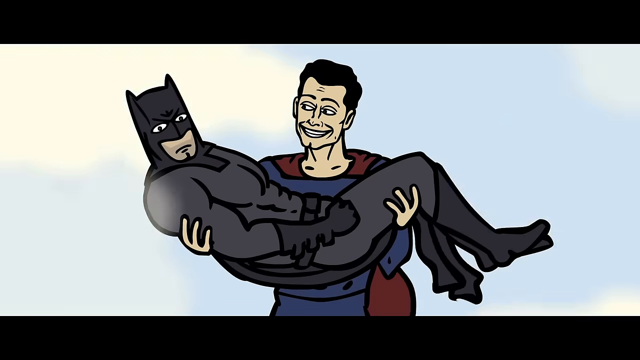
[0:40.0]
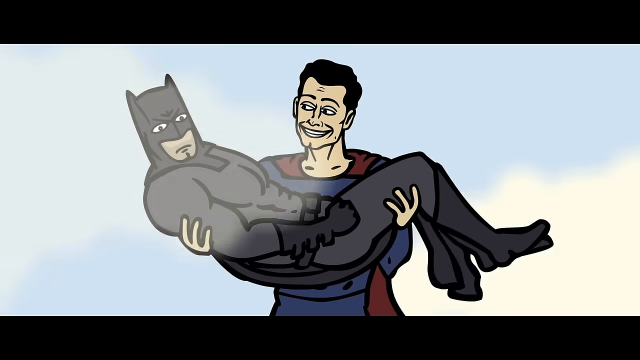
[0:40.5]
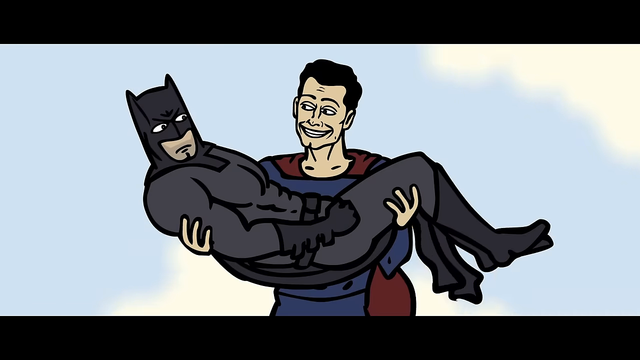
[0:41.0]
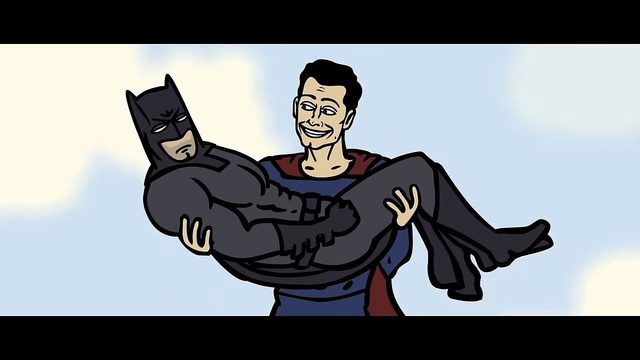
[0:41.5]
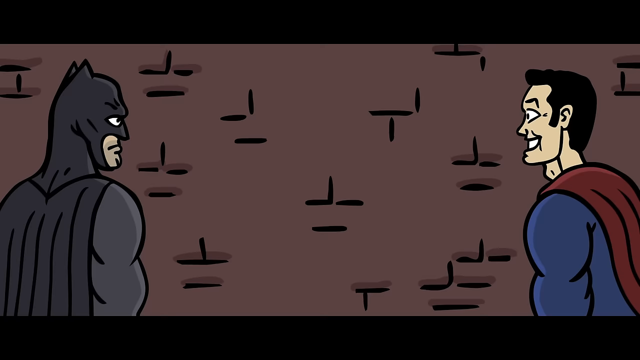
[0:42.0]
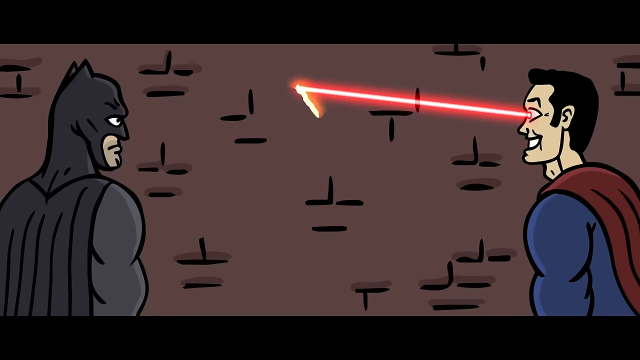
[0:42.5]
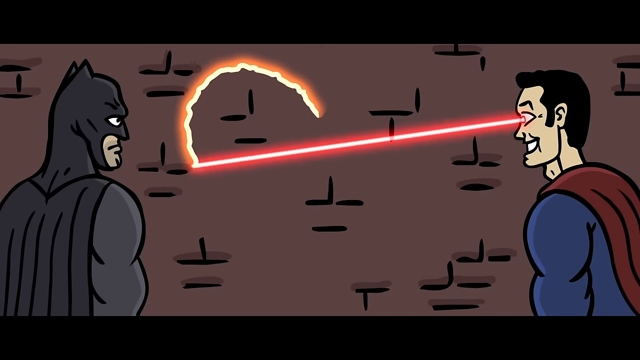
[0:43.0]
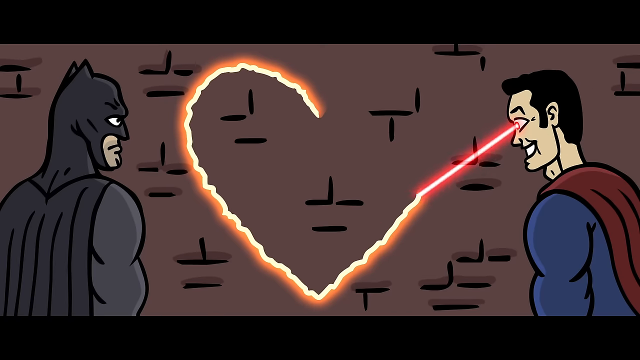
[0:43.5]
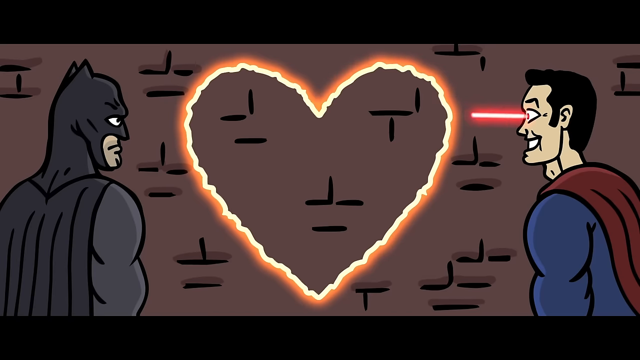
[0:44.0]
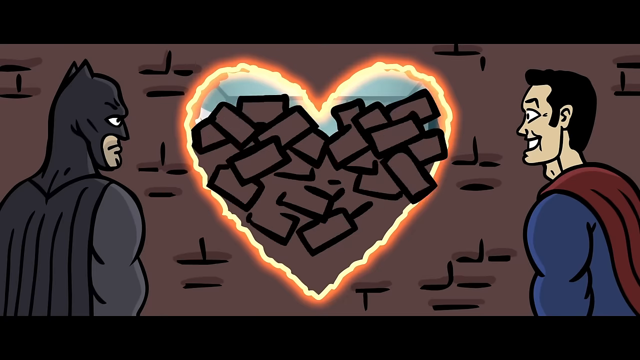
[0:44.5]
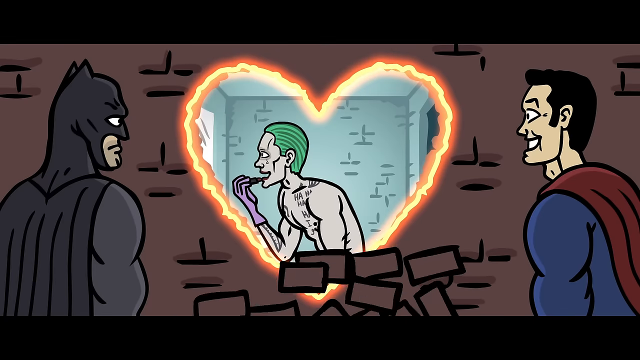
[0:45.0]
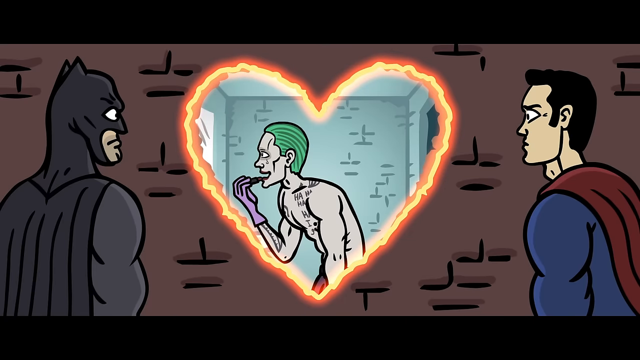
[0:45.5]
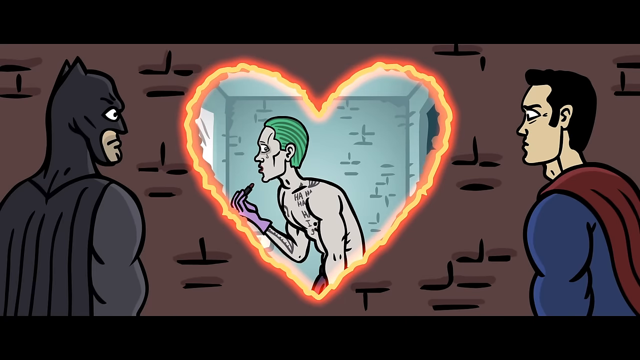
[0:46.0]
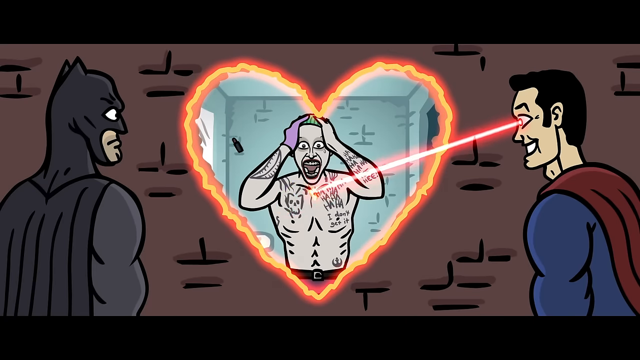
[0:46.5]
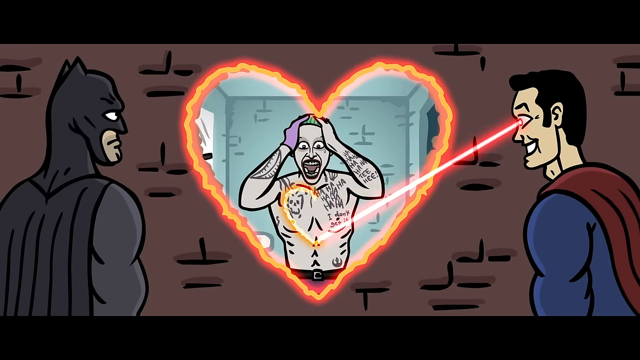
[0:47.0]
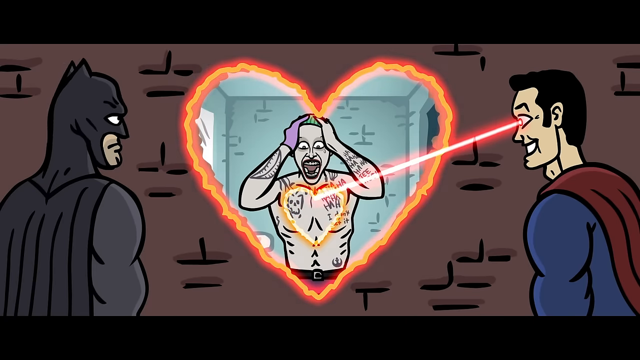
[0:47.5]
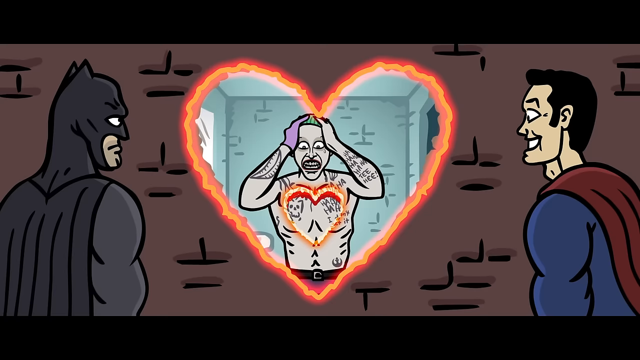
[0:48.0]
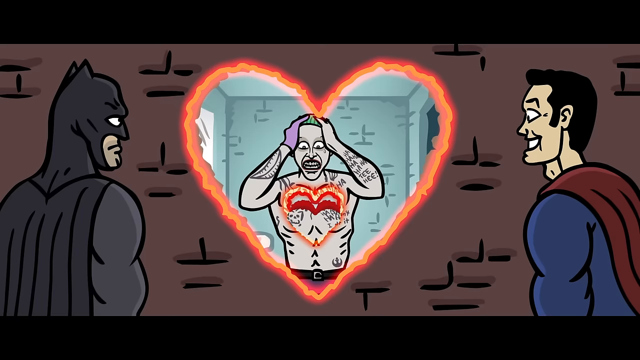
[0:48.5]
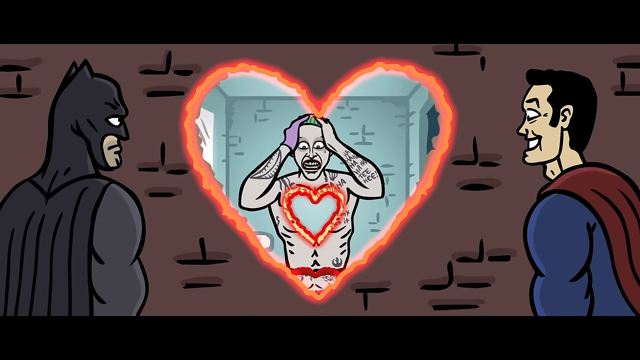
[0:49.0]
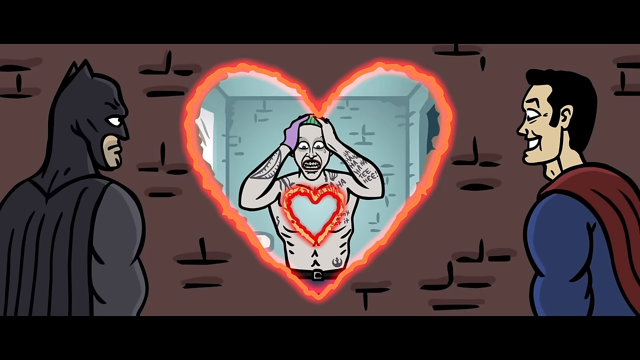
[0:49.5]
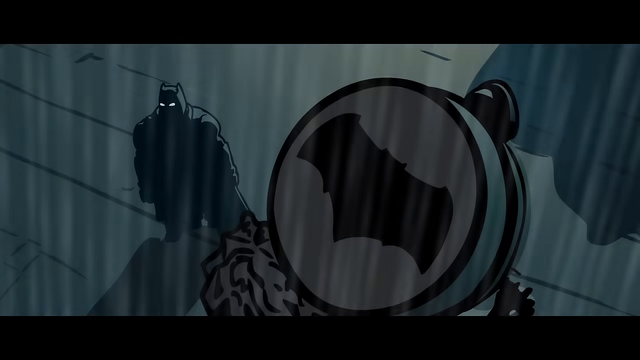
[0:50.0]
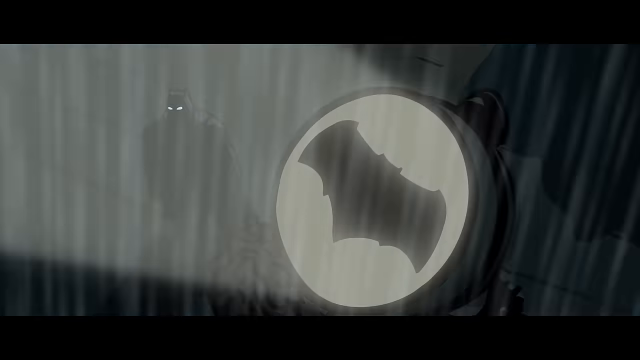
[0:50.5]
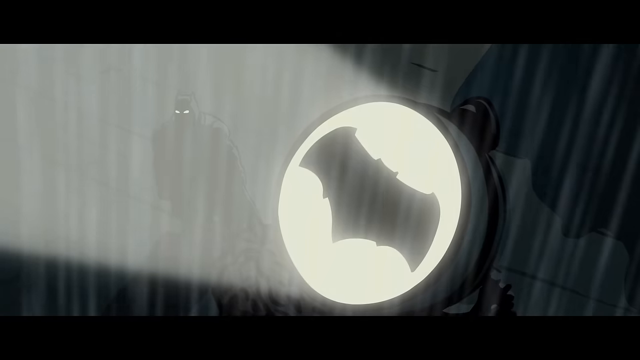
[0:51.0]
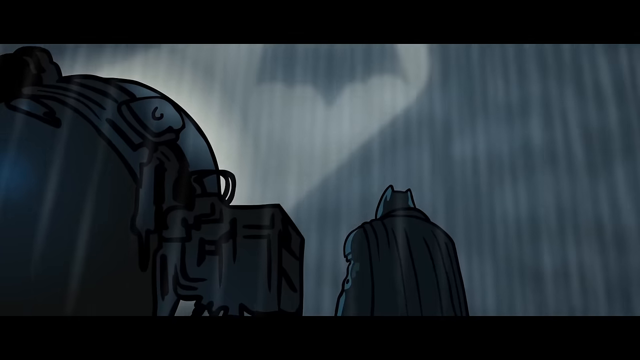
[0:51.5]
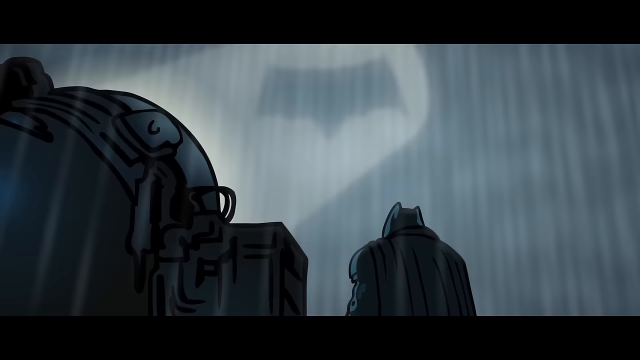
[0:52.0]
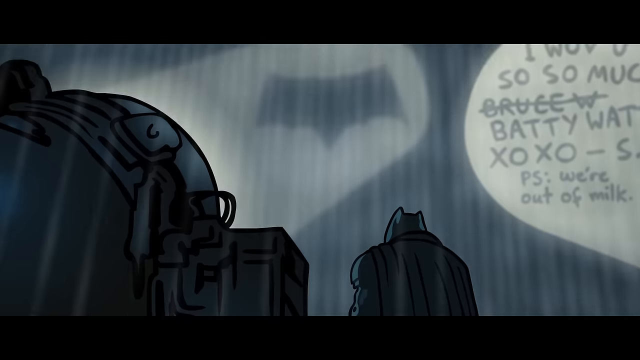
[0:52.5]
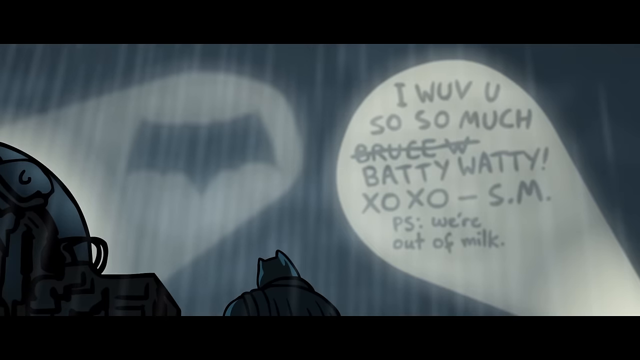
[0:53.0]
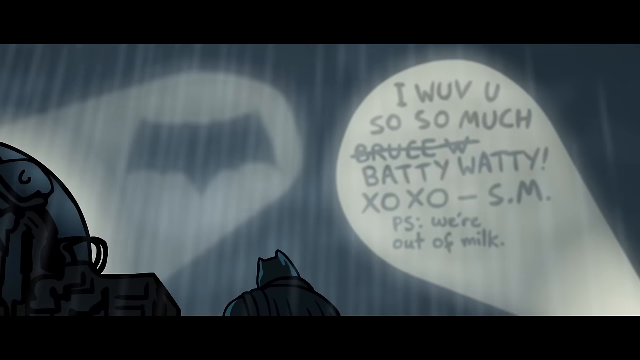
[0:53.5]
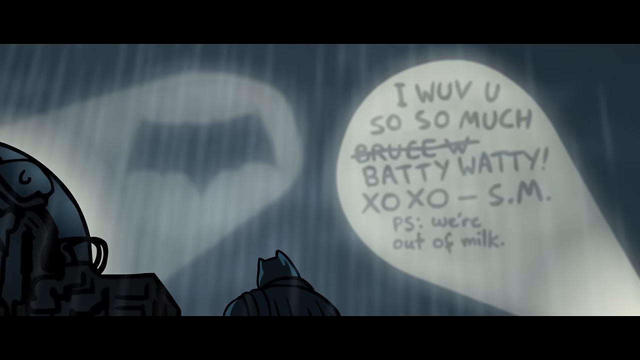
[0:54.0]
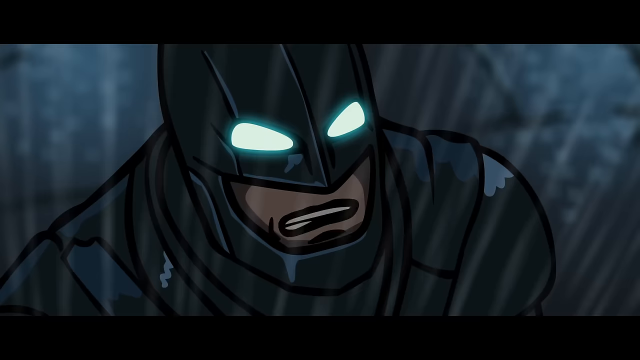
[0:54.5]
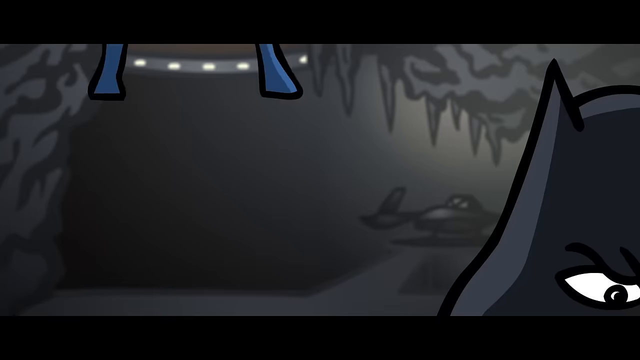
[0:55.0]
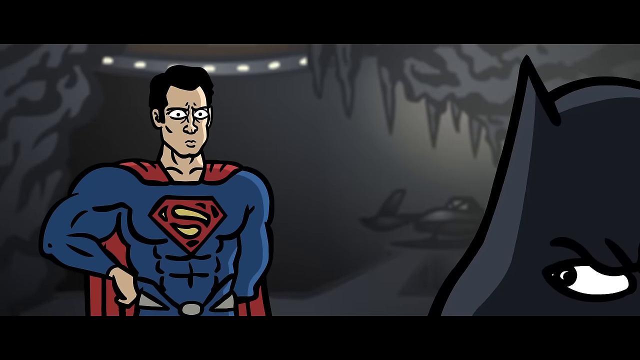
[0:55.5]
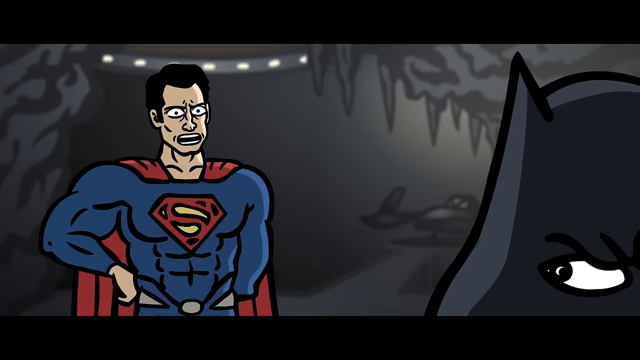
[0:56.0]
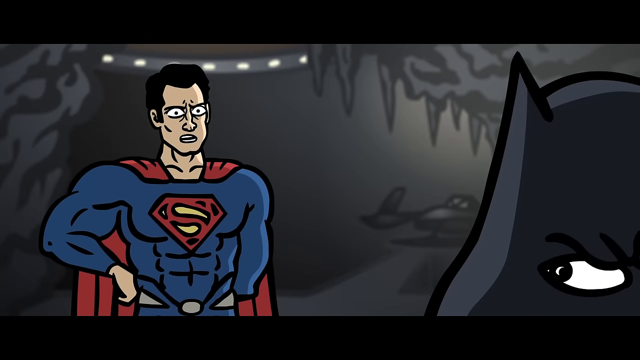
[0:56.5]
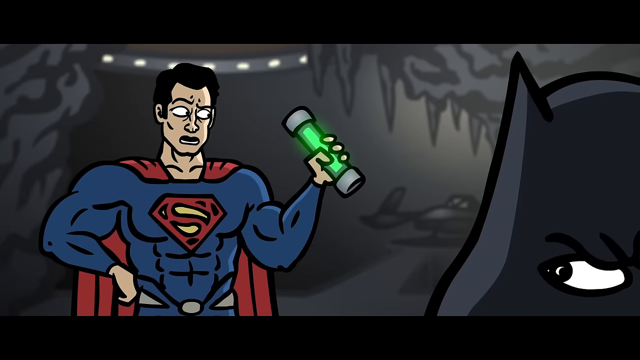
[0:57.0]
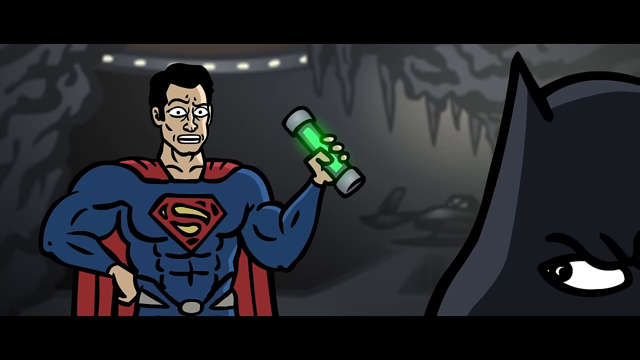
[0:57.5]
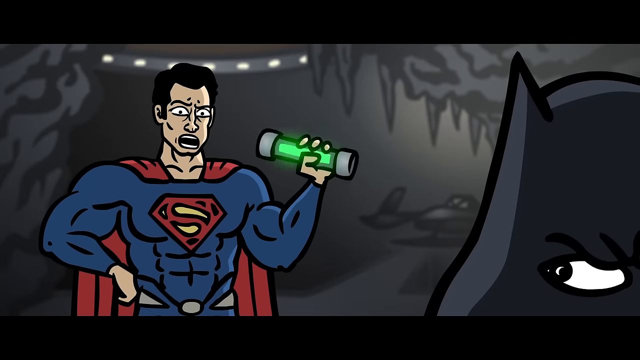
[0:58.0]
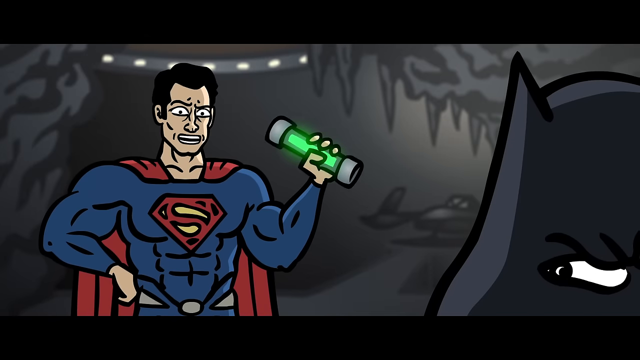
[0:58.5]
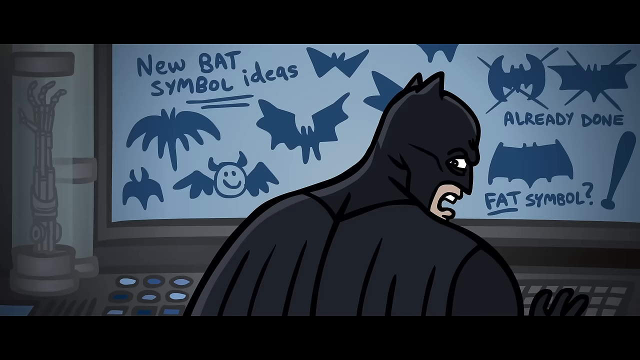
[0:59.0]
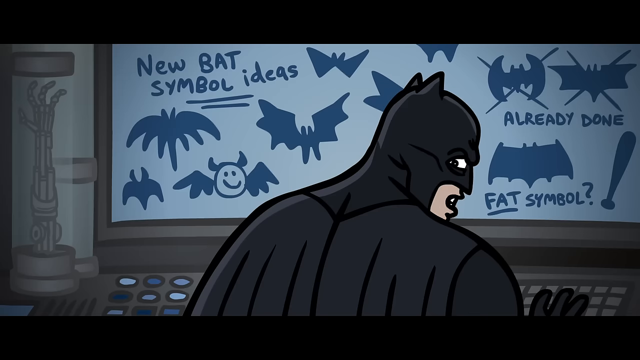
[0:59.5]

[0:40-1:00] Superman flies through the sky, cradling Batman in his arms and looking out of his right eye at Batman. The two then stand at a wall, Superman on the right and Batman on the left, while Superman uses his laser eyes to etch a heart on the wall. Where he etches it, the bricks fall away, revealing a figure, perhaps the Joker or the Riddler, standing inside a jail cell. He has a purple glove on his right hand and is feeding something into his mouth; he has slicked-back green hair, is not wearing a shirt, and looks like he is putting lipstick on. Superman then etches a heart into the Joker's chest, his flesh falls away, and a hole is left through his body.